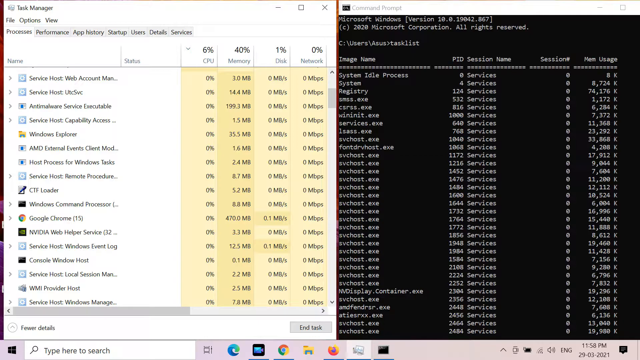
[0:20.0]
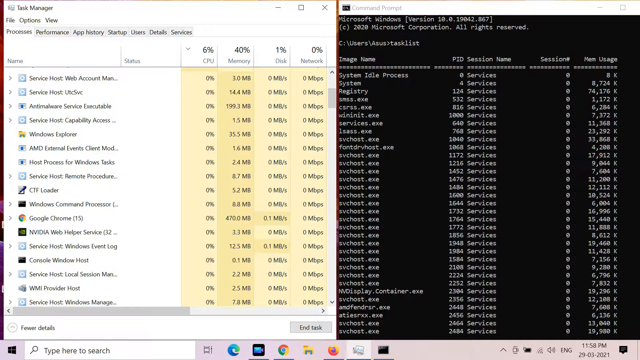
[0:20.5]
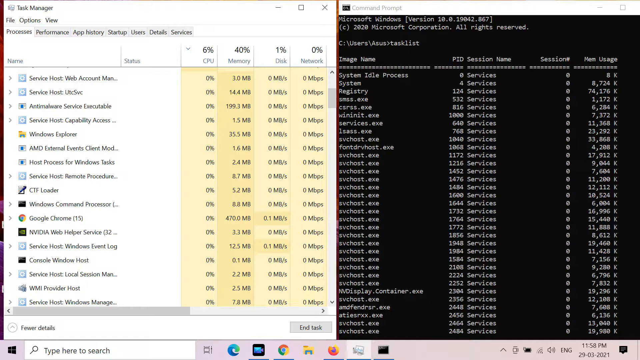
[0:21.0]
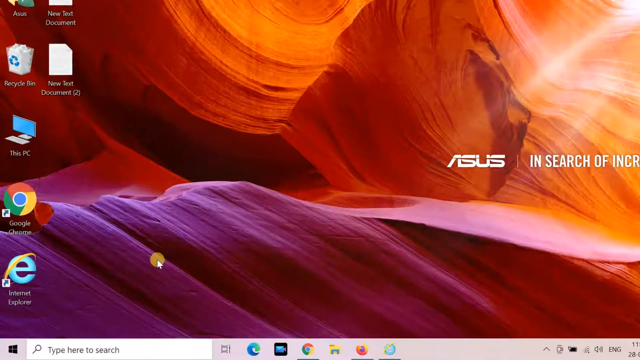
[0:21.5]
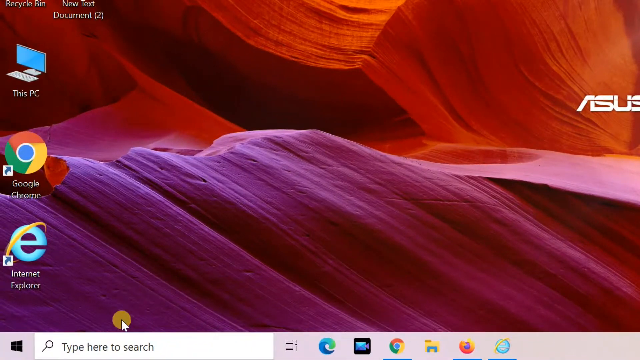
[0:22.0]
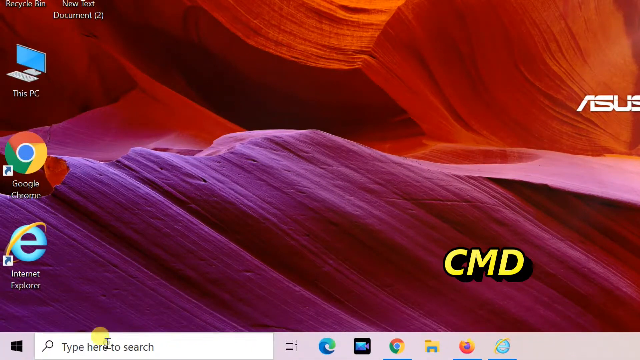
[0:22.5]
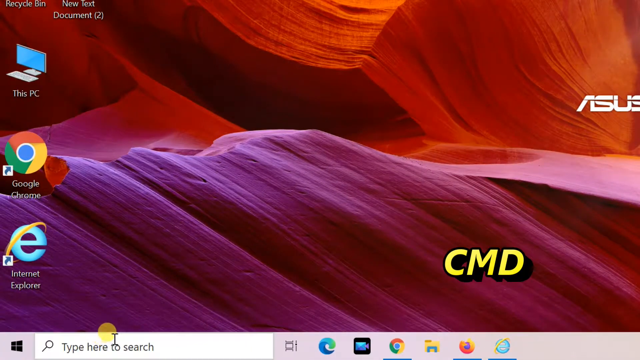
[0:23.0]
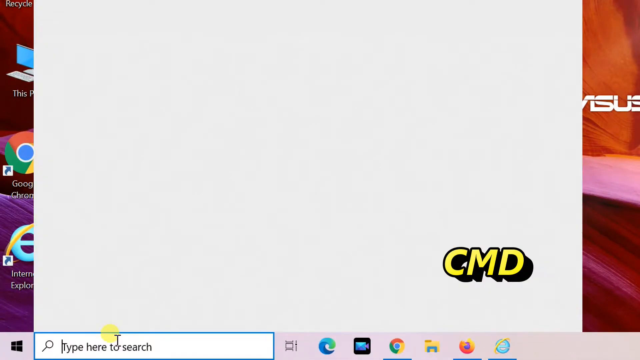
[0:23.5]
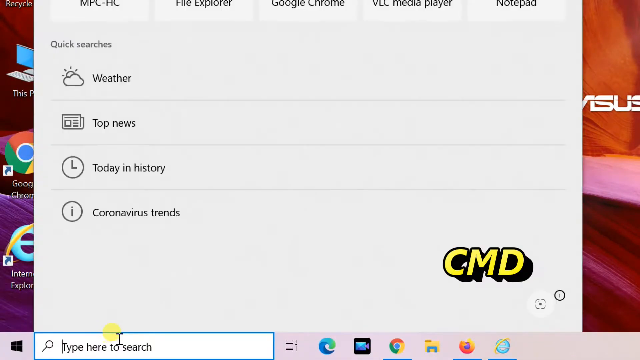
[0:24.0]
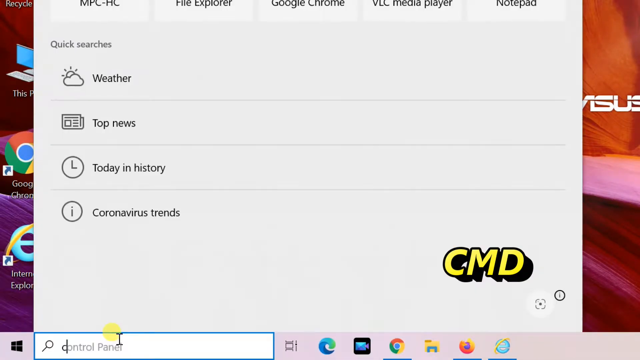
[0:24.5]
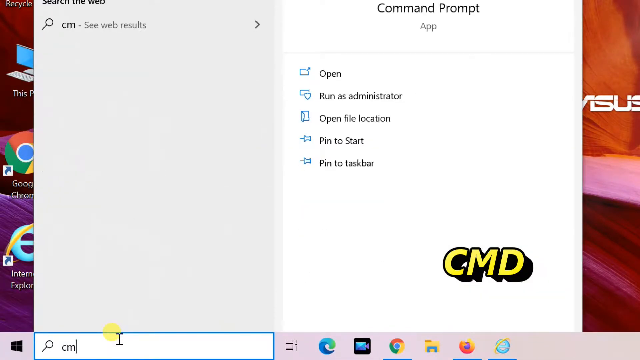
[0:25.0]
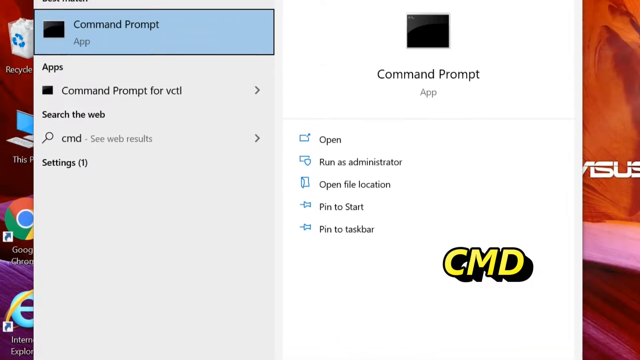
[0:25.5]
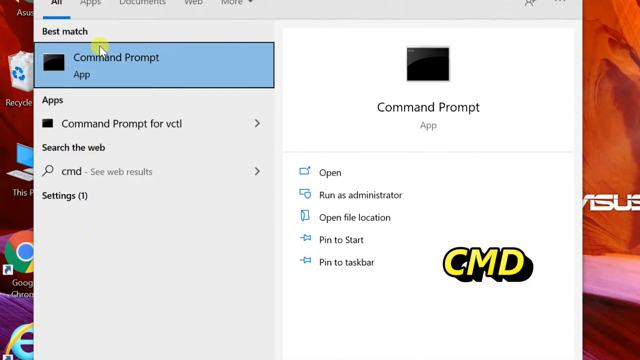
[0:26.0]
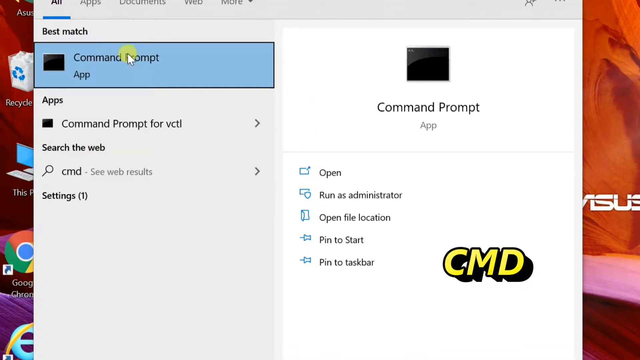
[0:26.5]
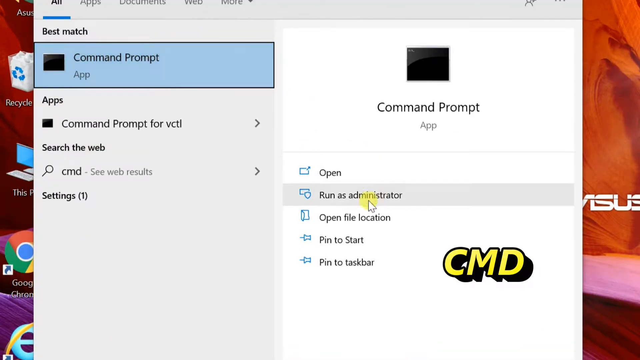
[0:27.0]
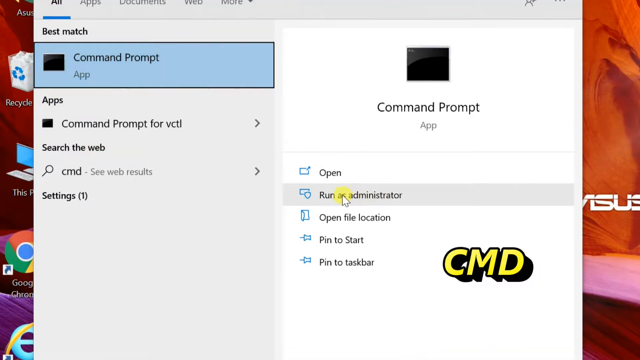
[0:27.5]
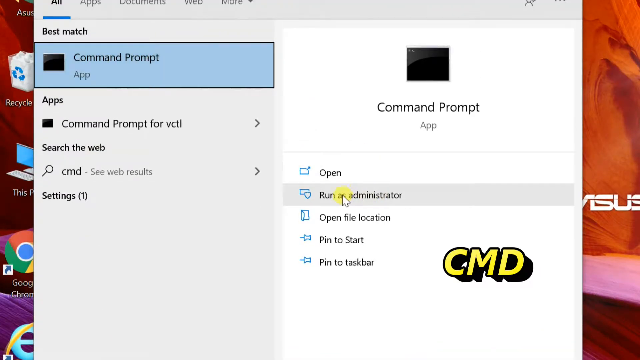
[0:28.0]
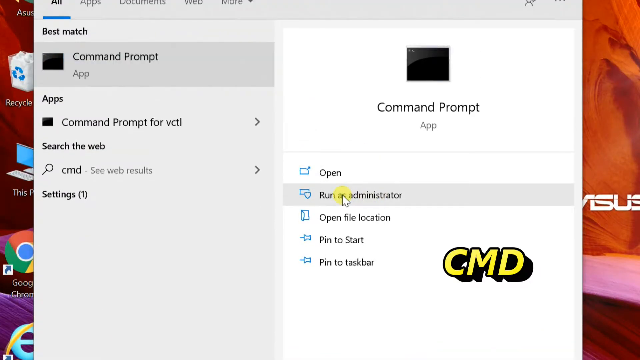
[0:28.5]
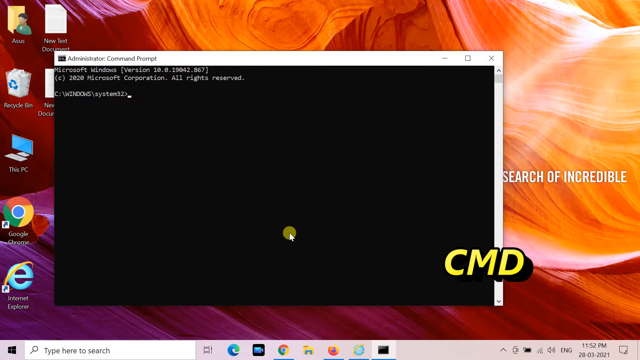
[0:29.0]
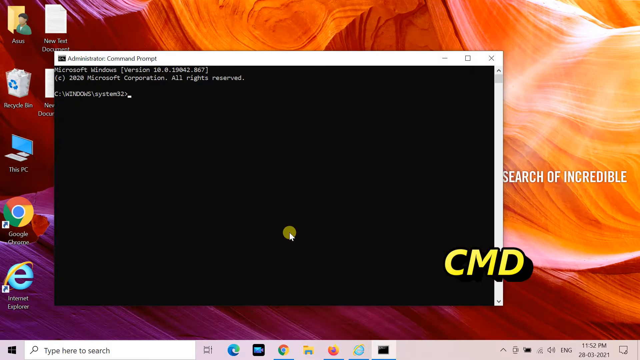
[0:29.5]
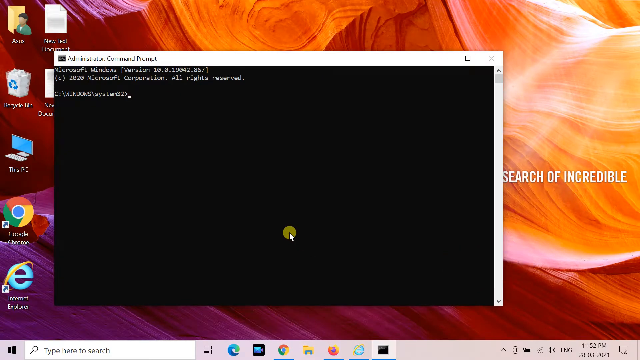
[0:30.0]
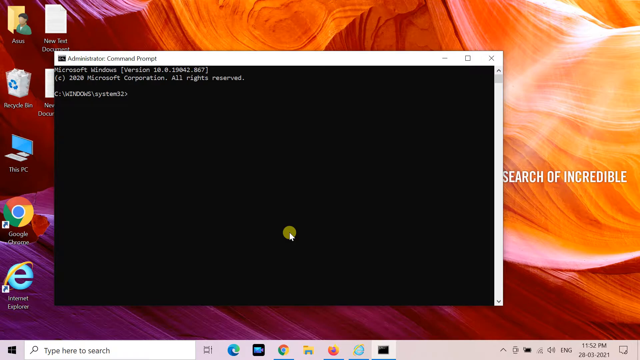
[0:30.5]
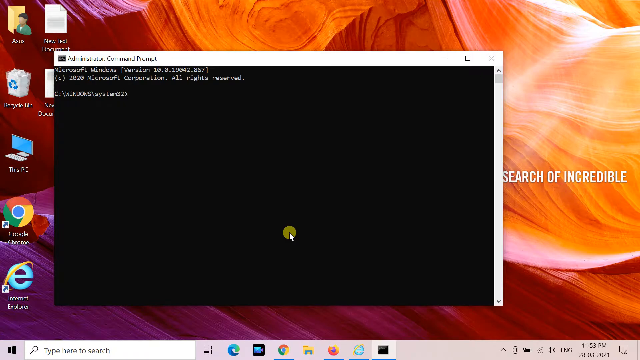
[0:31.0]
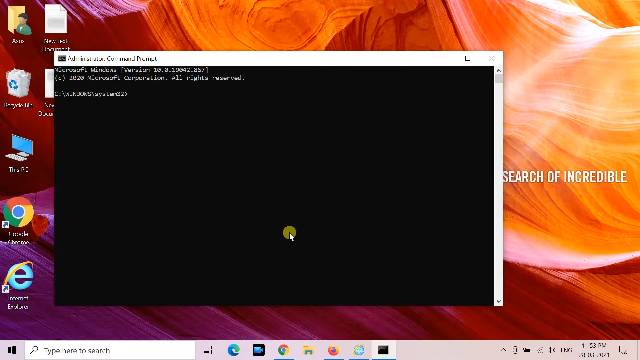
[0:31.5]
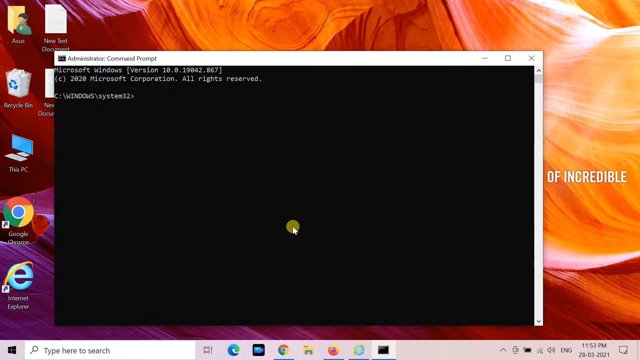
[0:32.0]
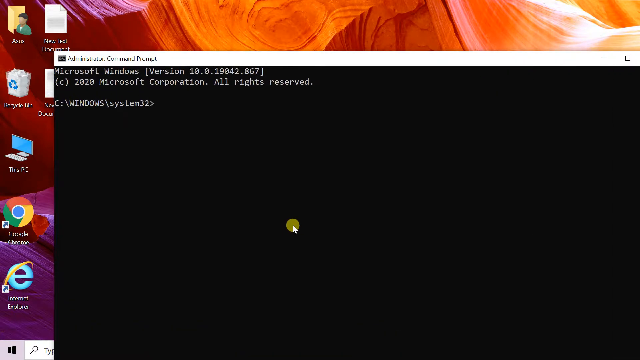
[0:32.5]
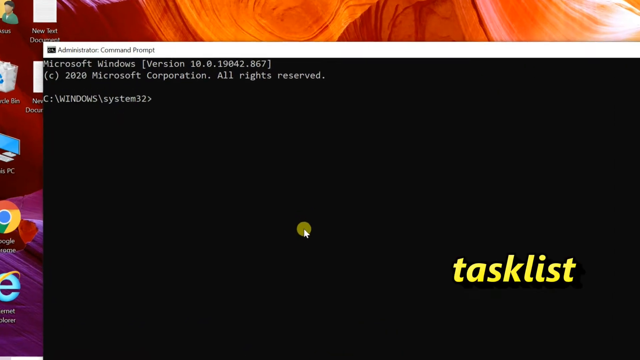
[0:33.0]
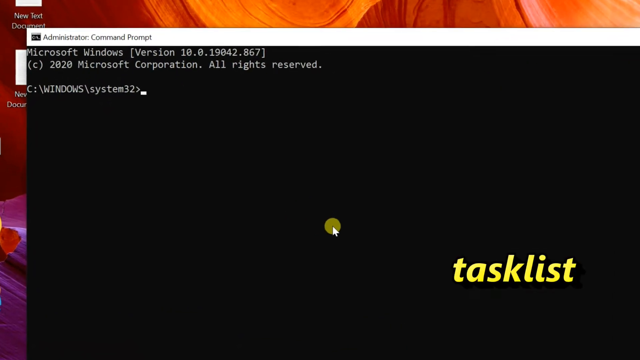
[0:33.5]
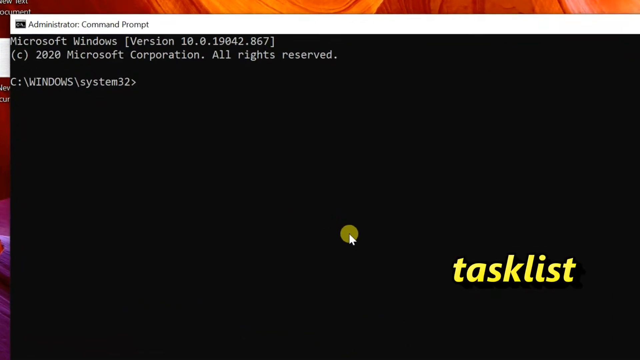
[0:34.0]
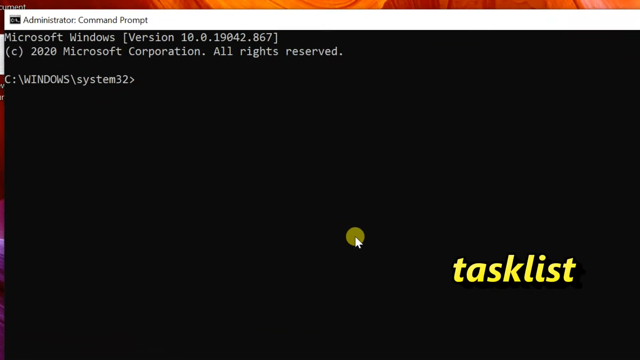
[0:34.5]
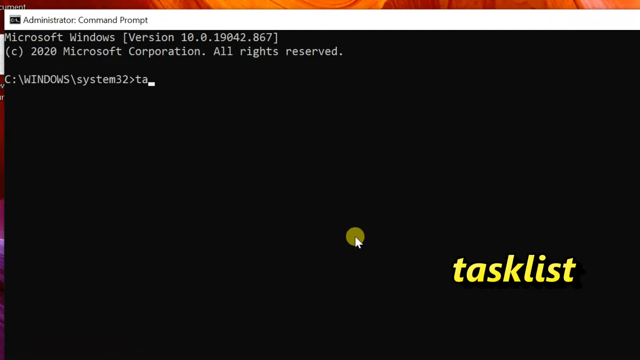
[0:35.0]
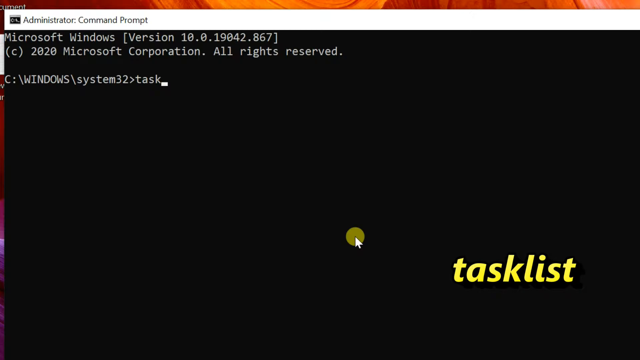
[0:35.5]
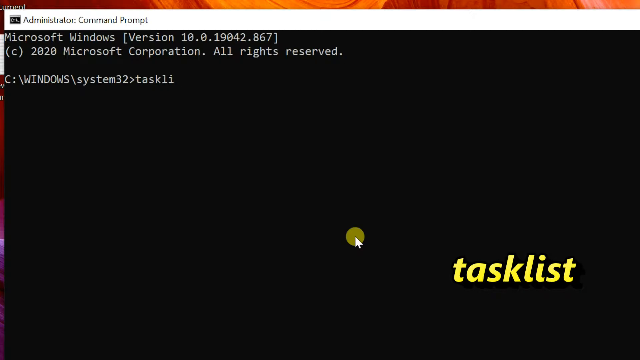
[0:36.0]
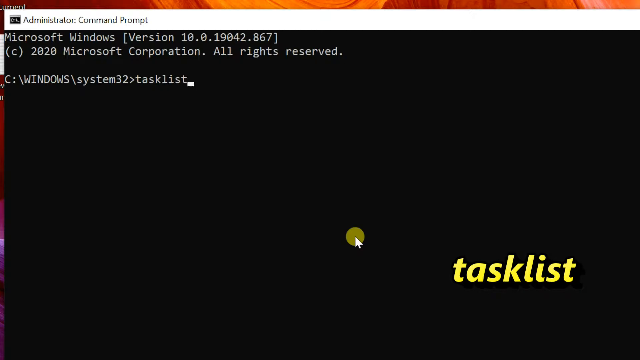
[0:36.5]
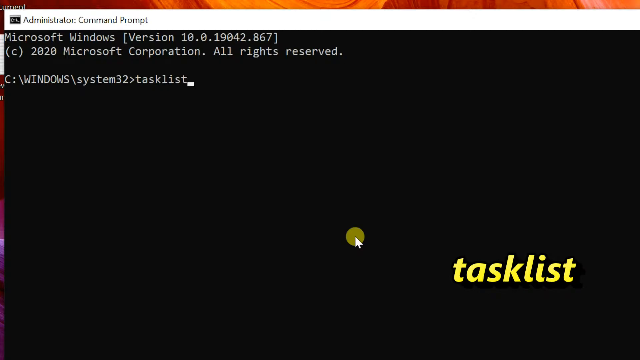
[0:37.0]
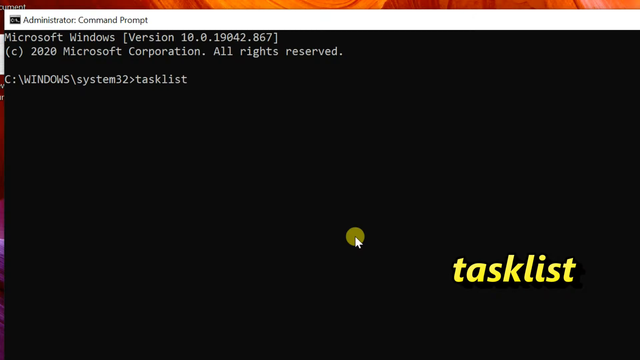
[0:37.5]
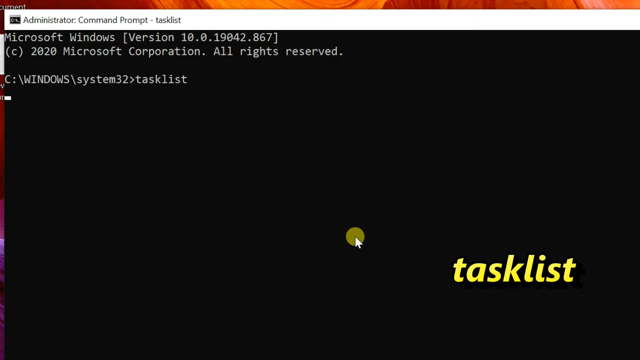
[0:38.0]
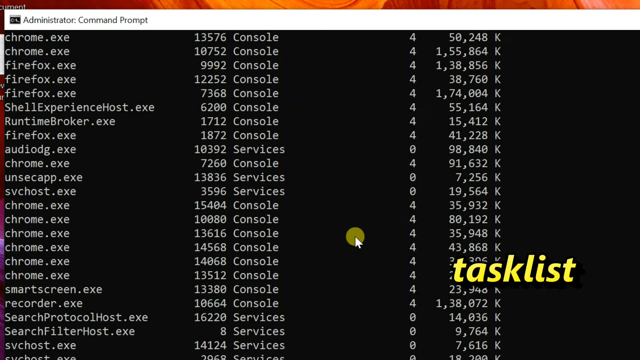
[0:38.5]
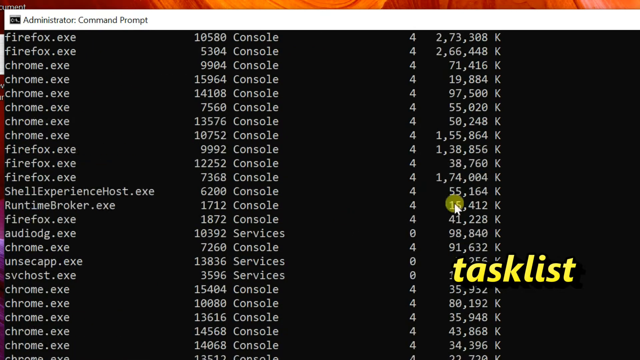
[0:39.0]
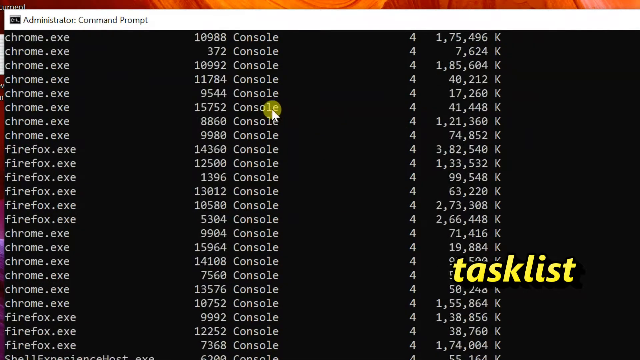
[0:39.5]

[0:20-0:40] Starting from the Windows UI, the user clicks the search box just to the right of the Start menu on the left of the screen. Some recent quick searches appear, then the user chooses app and finds the command prompt app, which offers the options Open, Run as administrator, Open file location, Pin to Start and Pin to taskbar. The user chooses to run the command prompt as administrator, then types "task list" at the command line. The resulting task list is the same one seen earlier beside the Windows GUI.